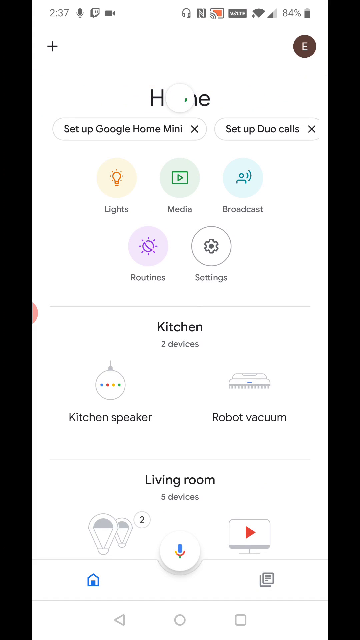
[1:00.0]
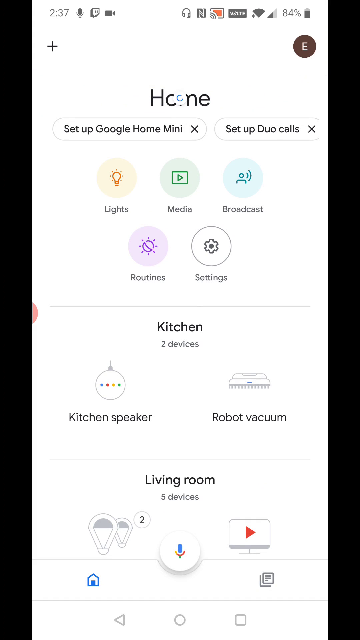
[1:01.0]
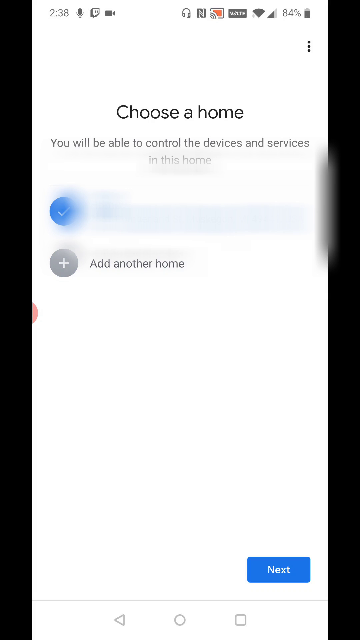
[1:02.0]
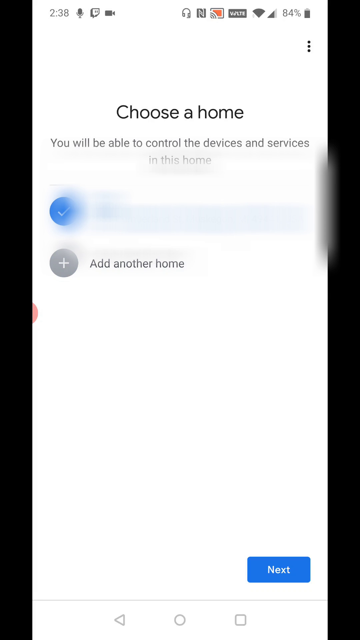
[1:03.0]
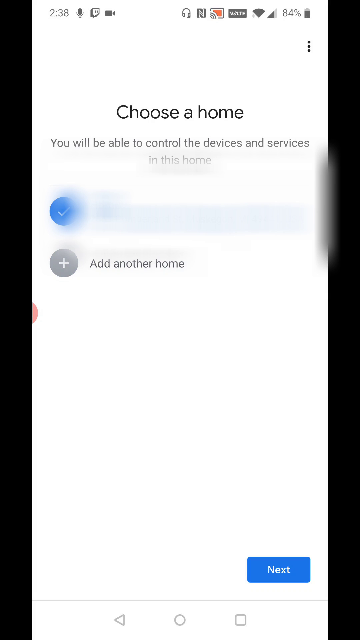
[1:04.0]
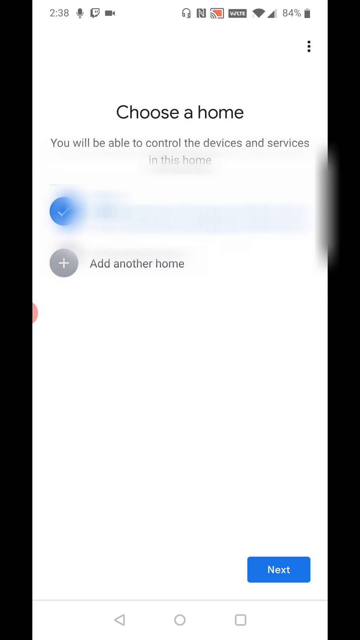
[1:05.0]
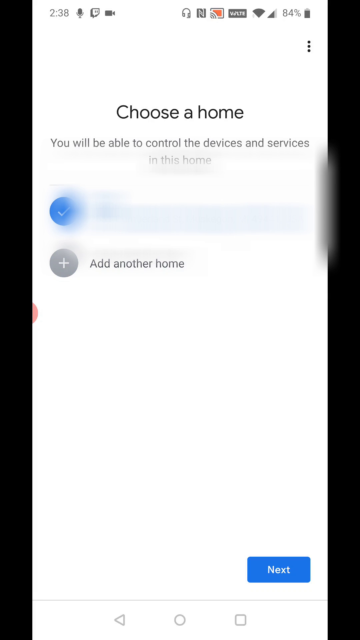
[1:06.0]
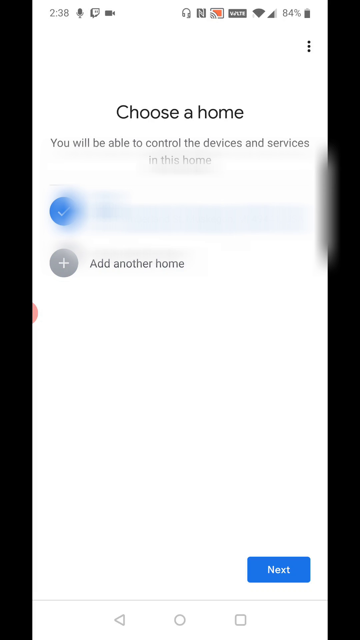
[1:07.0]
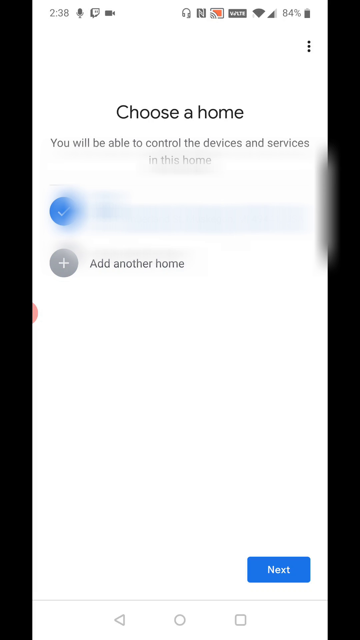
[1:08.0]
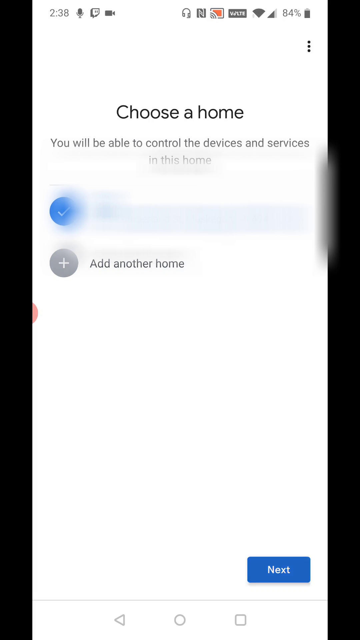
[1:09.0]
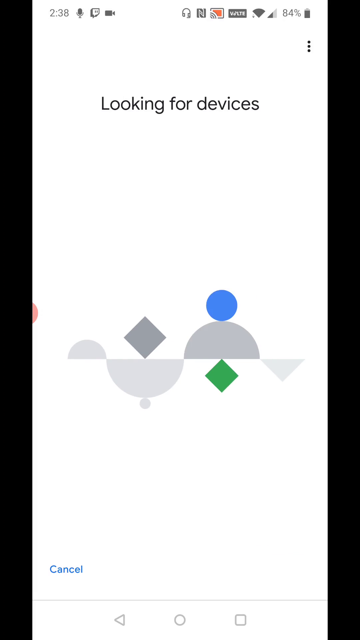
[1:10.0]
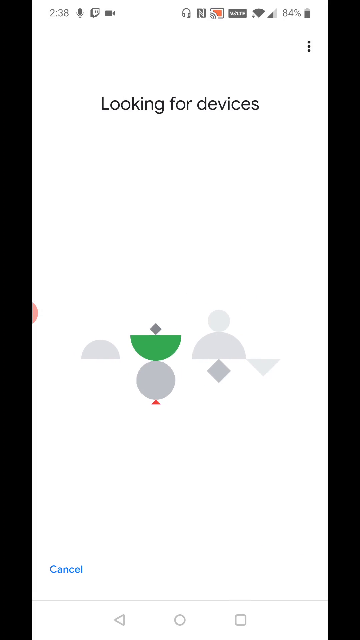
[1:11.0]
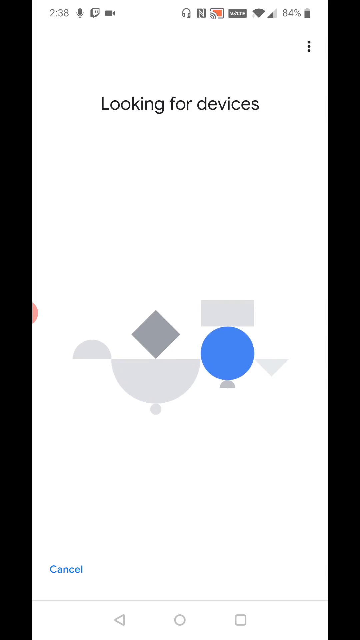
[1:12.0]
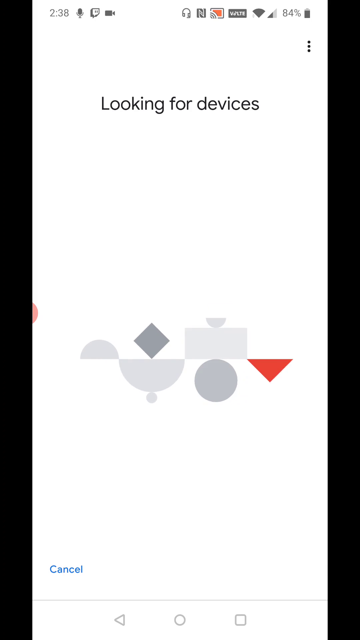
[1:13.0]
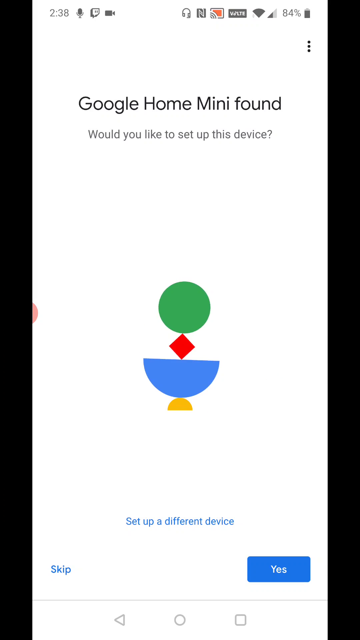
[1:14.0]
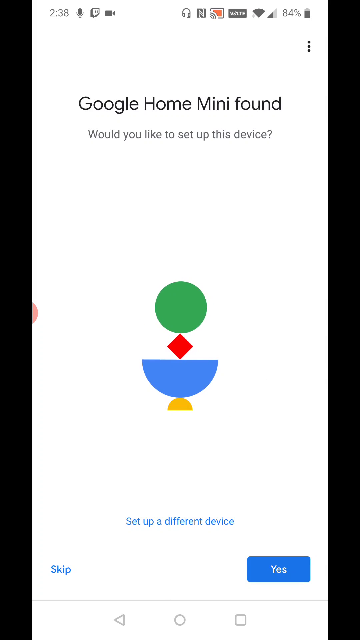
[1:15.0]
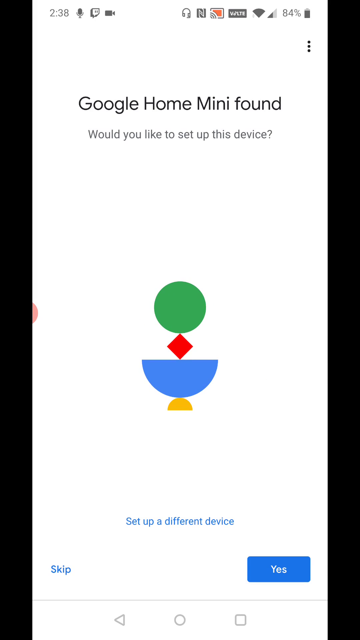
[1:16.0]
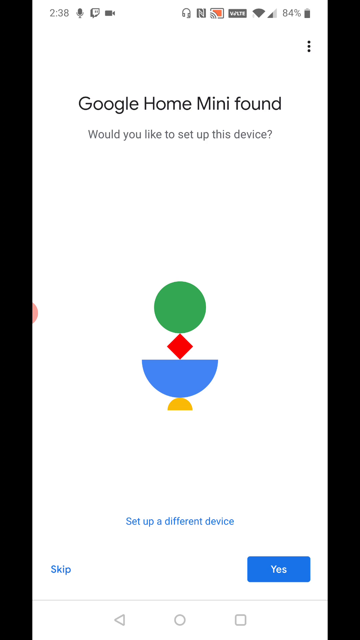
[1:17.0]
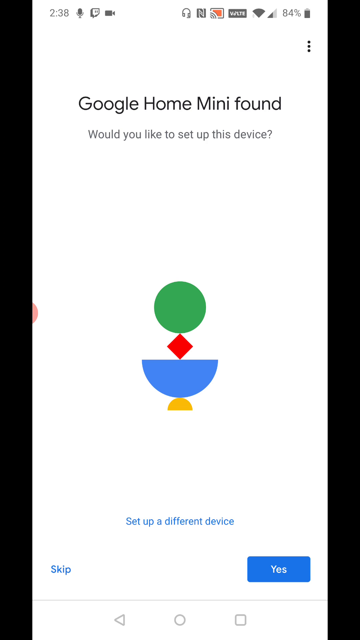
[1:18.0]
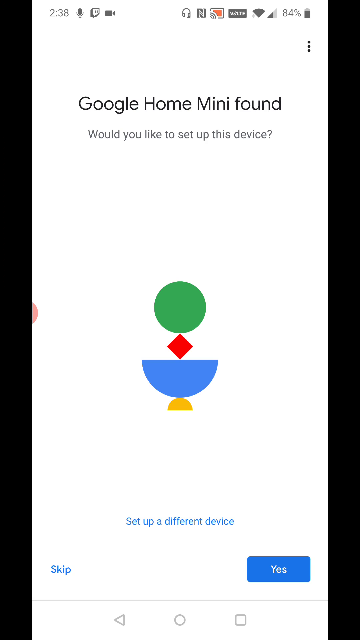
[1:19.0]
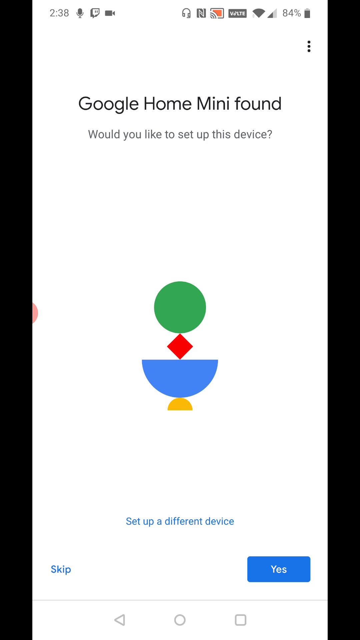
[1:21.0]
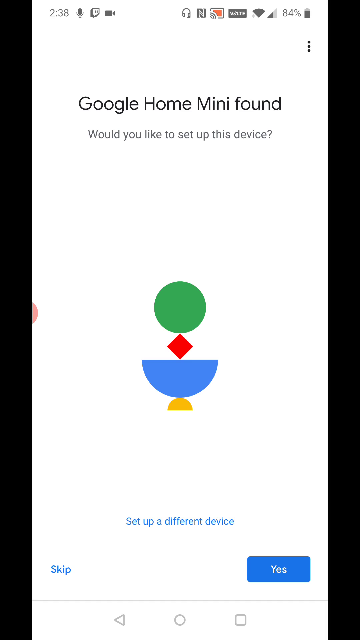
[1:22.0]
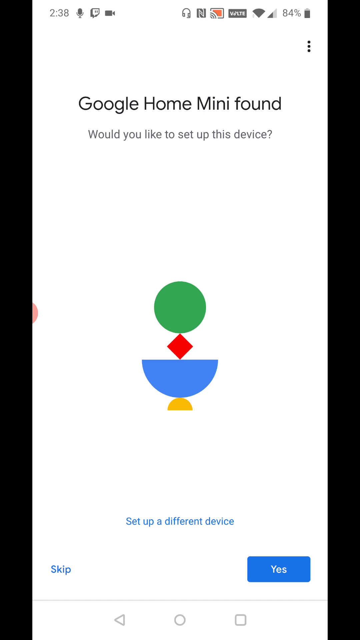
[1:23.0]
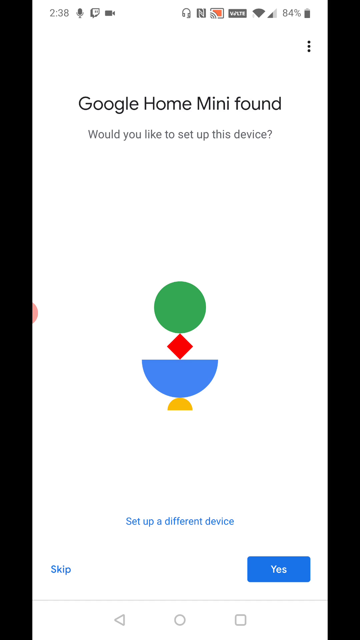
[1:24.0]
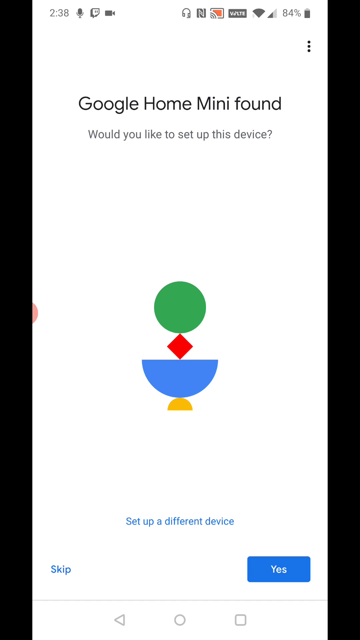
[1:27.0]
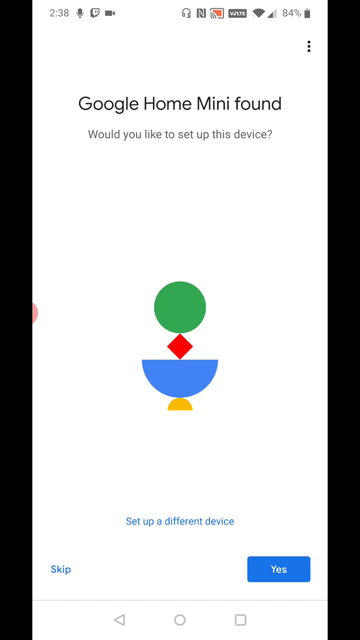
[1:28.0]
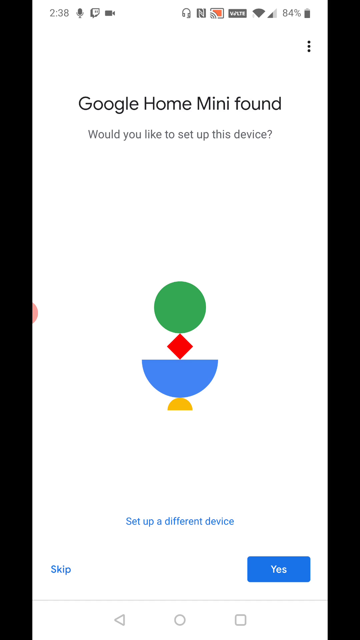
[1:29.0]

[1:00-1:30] The home screen on the phone shows setup options, the kitchen with two devices, "kitchen speaker" and "robot vacuum", and a room with five devices whose devices cannot be seen. The phone shows 2:37 and 84 percent battery. A screen reads "Choose a home" and "You'll be able to control the devices and services in this home." The app then looks for devices, with a loading screen, until it shows "Google Home Mini found" and "Would you like to set up this device?"